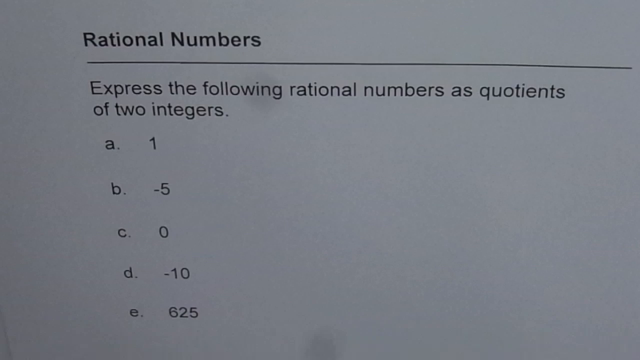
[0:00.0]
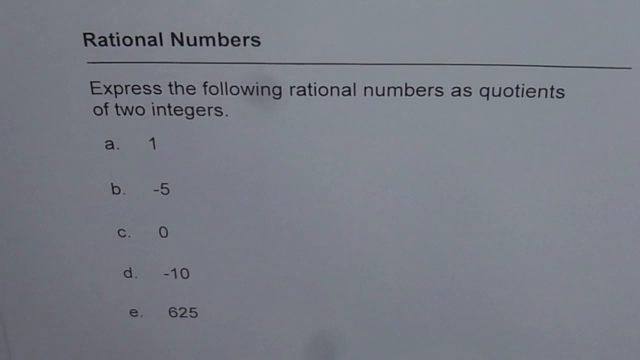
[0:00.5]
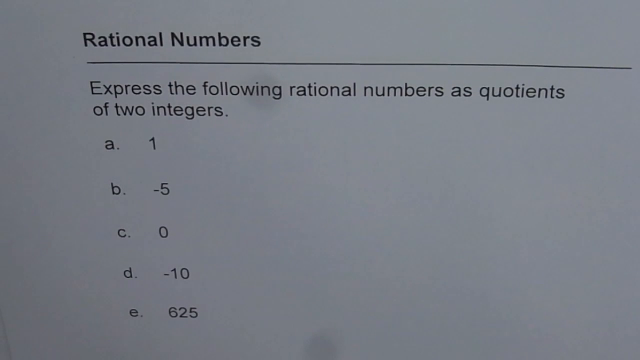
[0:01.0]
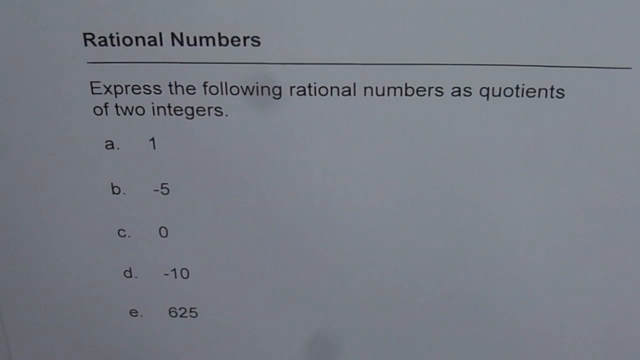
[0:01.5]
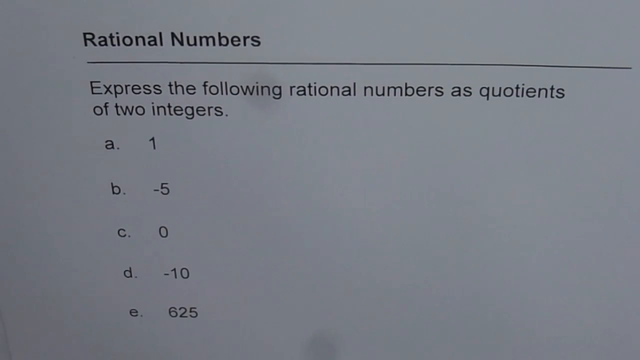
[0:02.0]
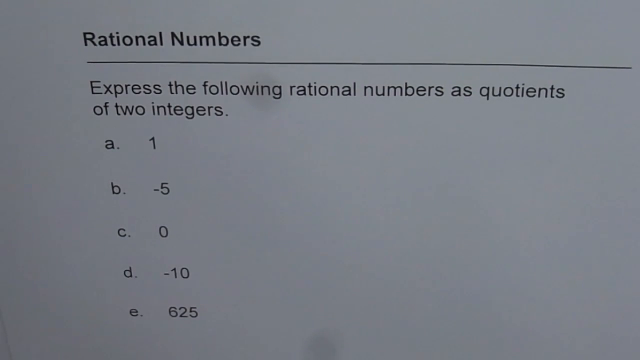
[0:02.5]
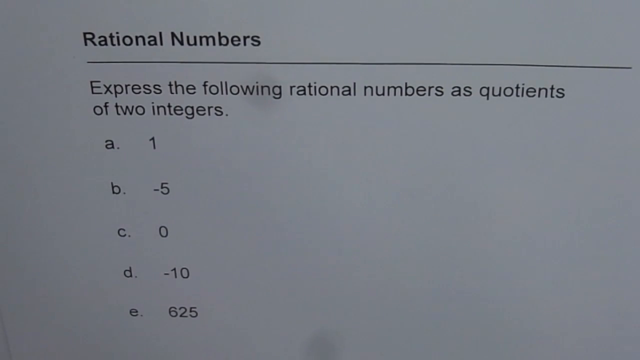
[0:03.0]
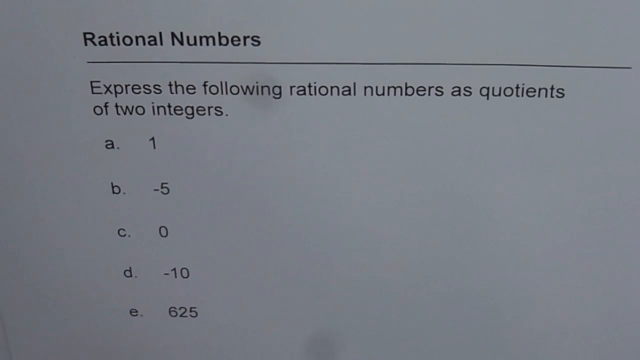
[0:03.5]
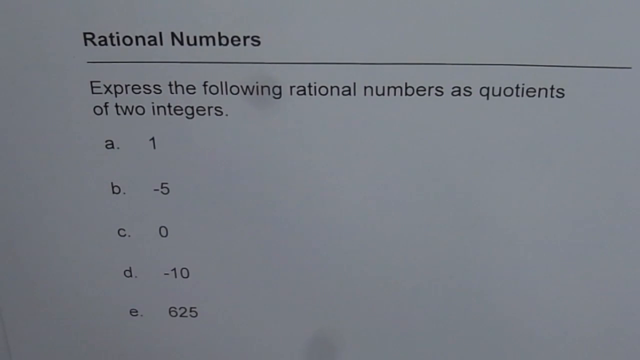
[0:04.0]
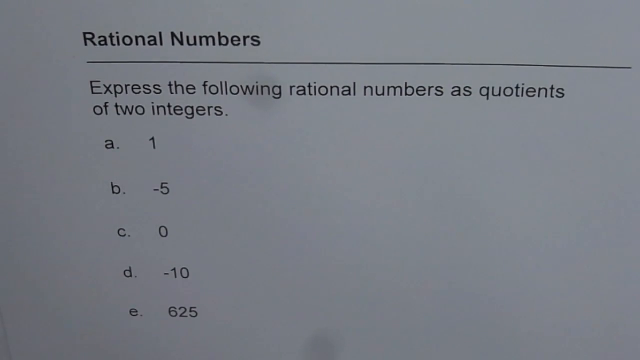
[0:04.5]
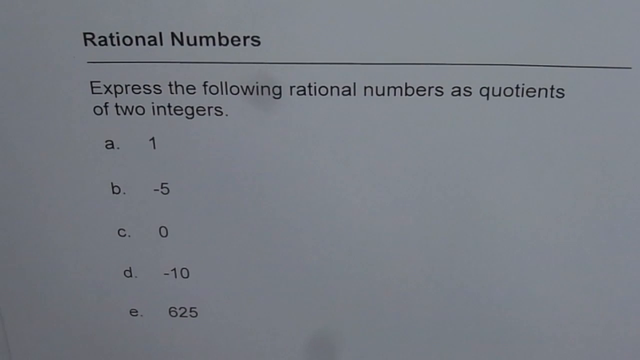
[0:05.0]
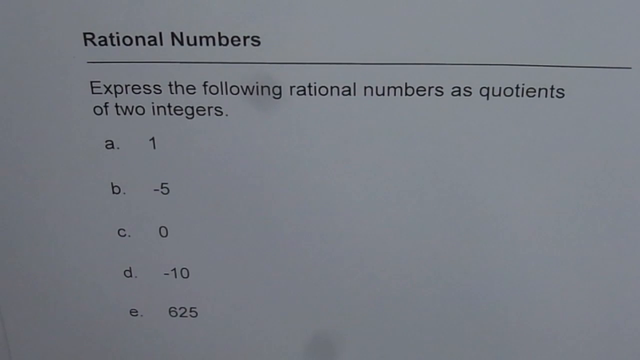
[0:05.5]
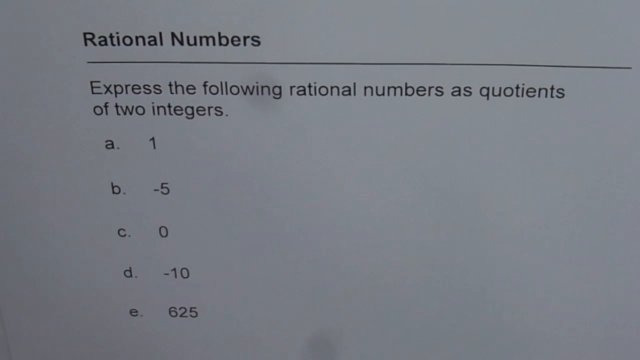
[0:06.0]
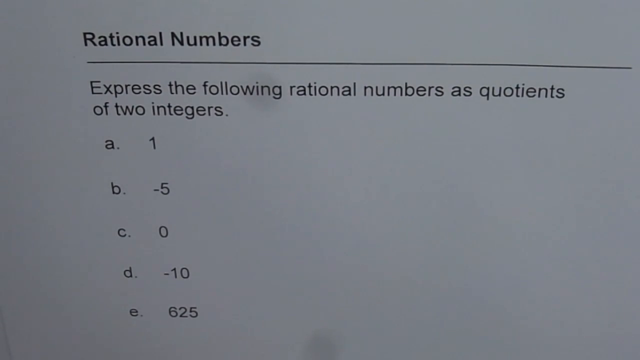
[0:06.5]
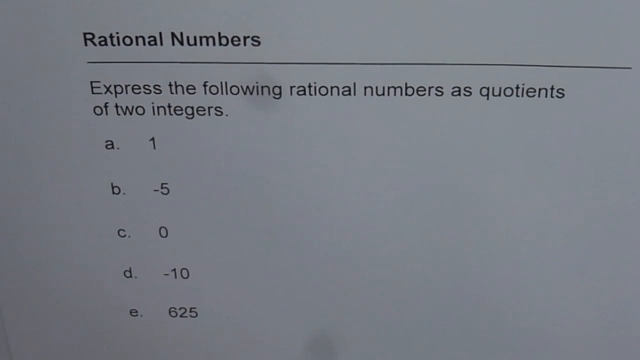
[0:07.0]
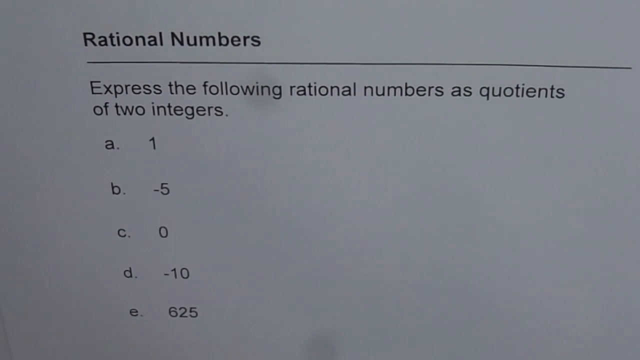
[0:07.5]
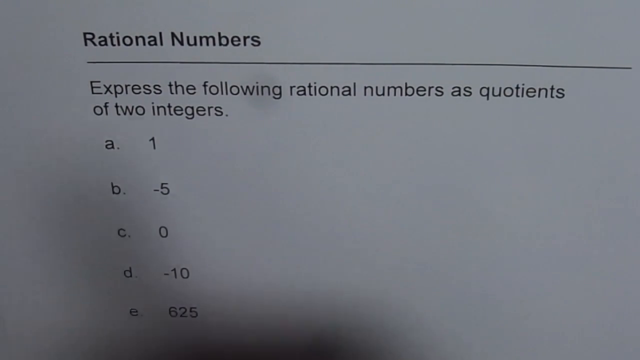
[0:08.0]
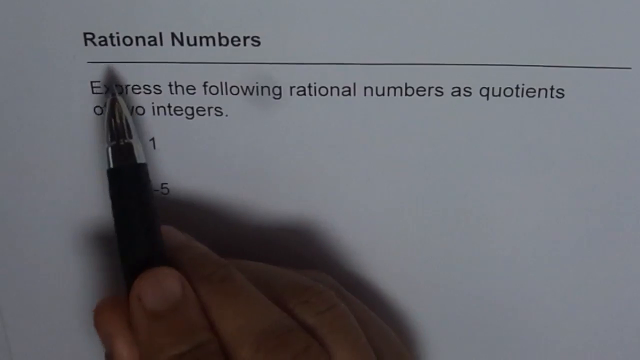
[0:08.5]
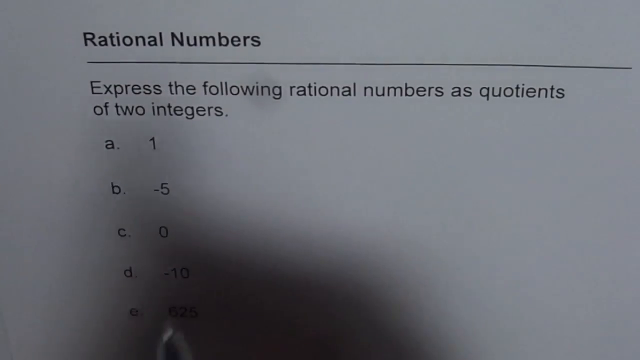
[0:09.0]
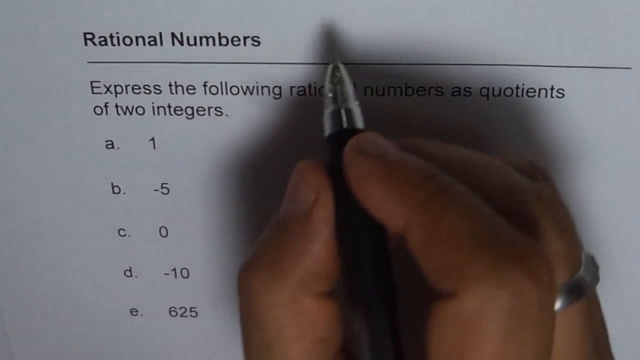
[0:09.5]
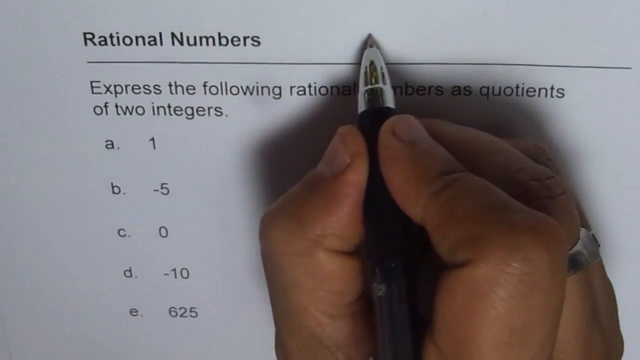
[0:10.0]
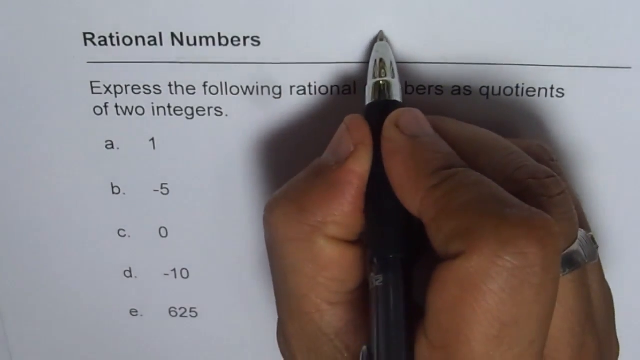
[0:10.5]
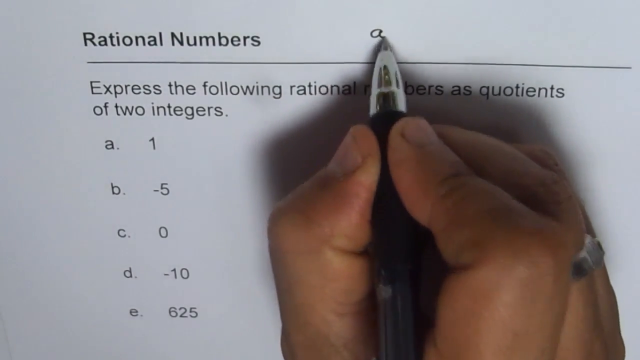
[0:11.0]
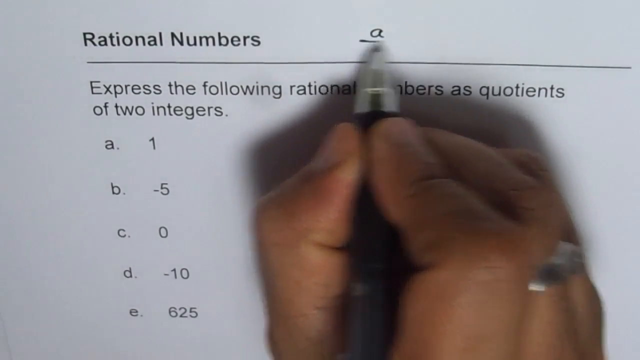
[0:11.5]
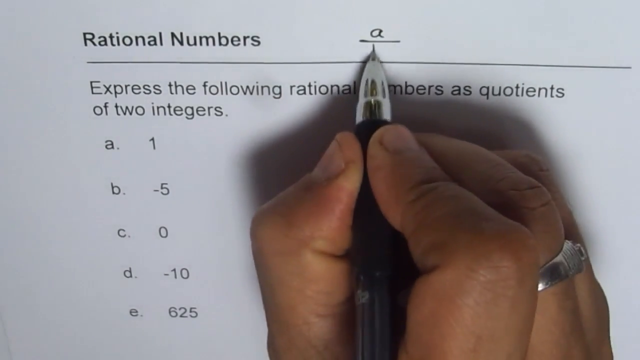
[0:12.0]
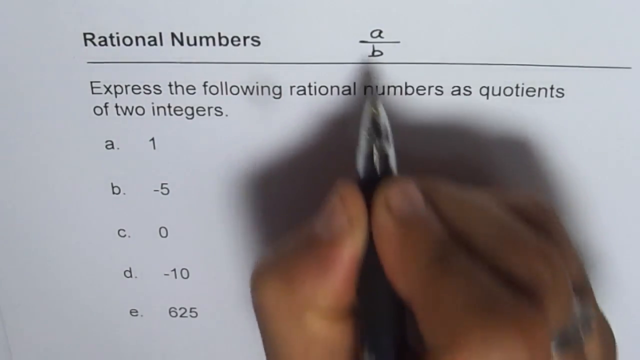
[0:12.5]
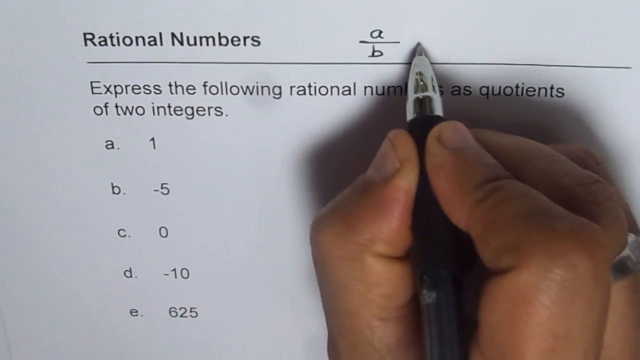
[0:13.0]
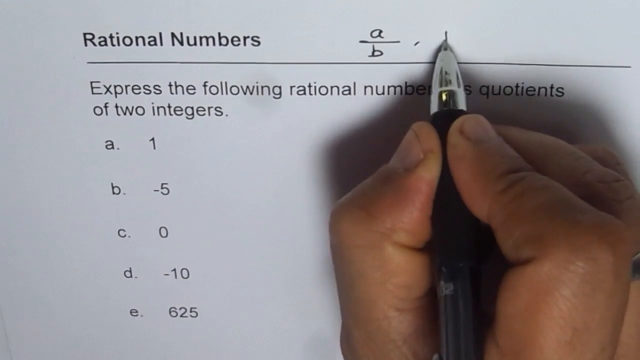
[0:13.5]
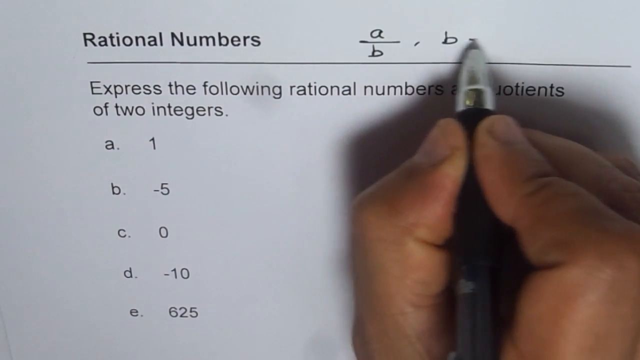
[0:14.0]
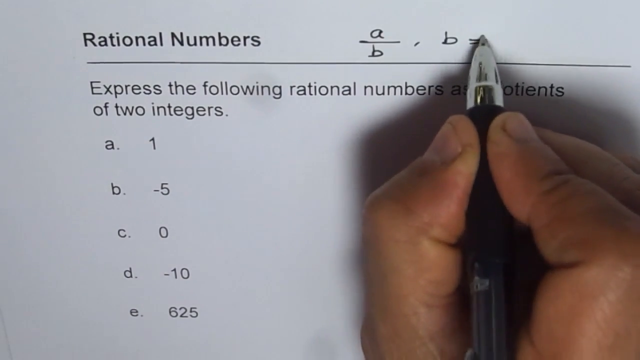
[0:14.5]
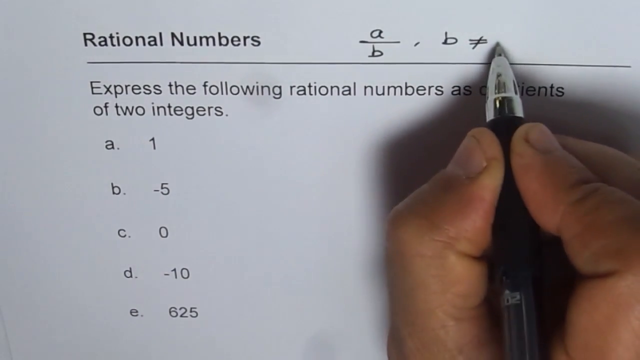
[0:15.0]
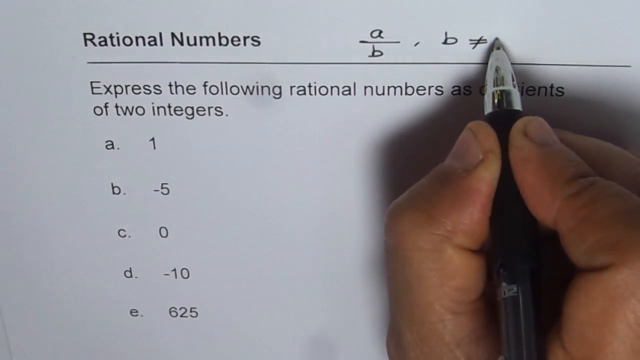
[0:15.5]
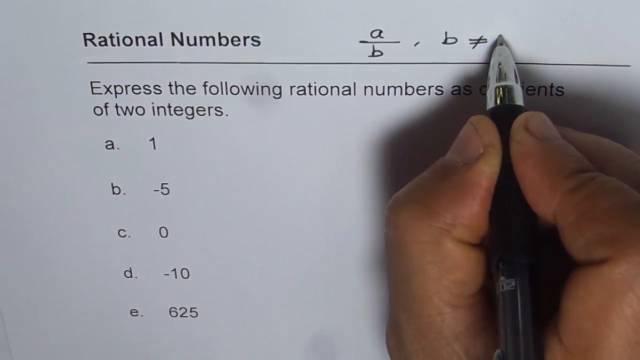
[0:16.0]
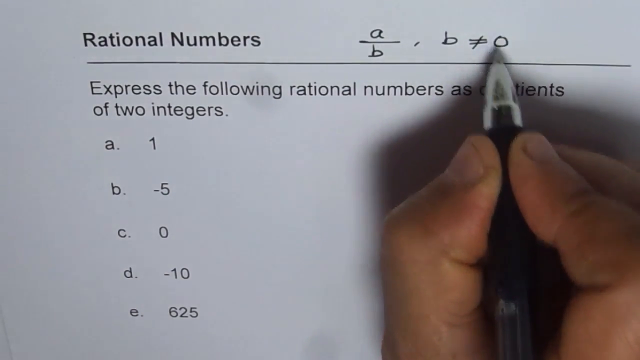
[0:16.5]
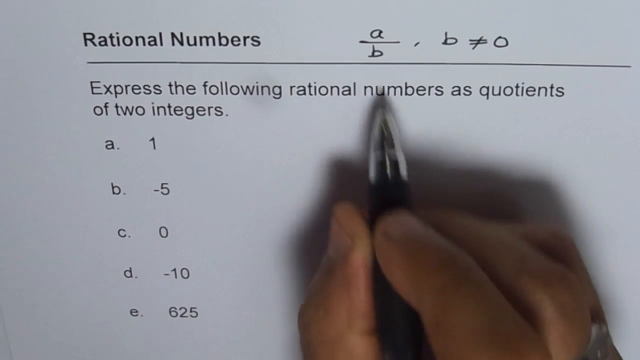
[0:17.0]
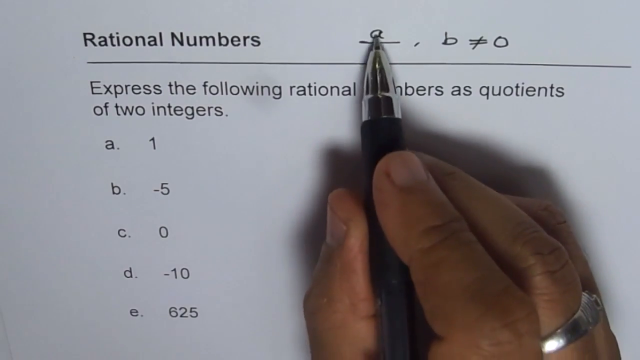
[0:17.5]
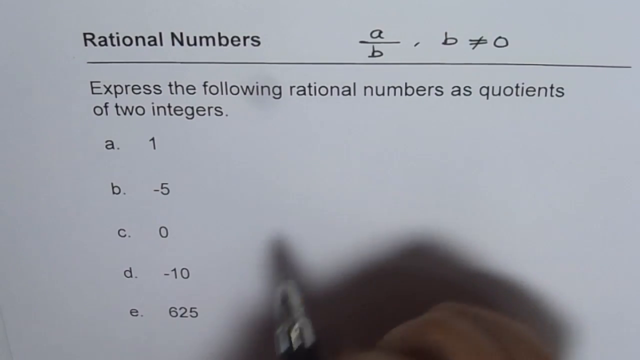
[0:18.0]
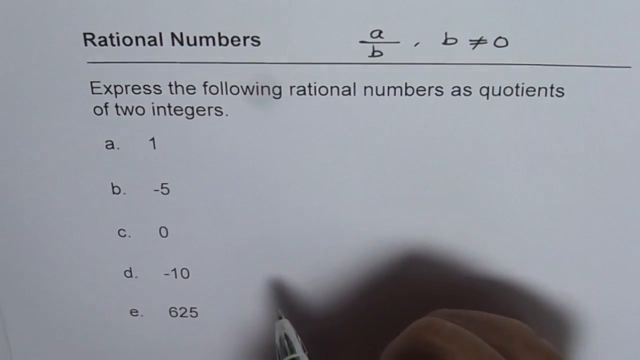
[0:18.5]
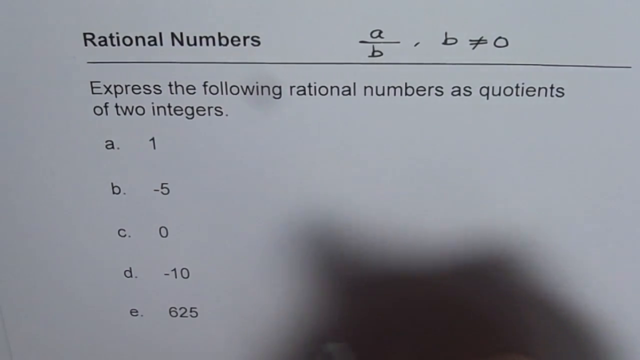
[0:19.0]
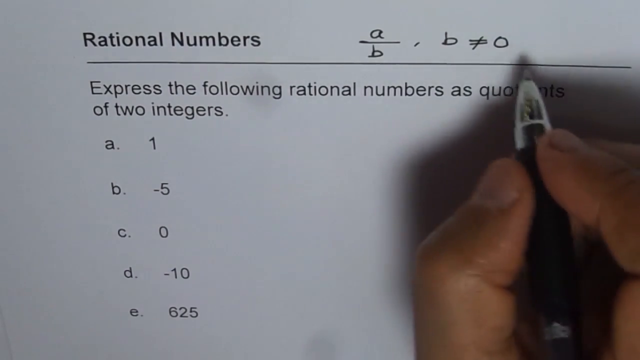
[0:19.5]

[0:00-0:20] What looks like a question on an exam paper appears. The white paper looks slightly skewed, as if it is bending forward at the upper part and is further from the camera toward the lower right part. A hand holding a pen appears on the screen. At the very top, in bold black letters, the paper reads "rational numbers", and a white line runs from underneath the R toward the right-hand side of the paper without completely touching its edge. Below that, in less dark black, it reads "express the following rational numbers as quotients of two integers", followed by a list of items: A is 1, B is minus 5, and C is 0.